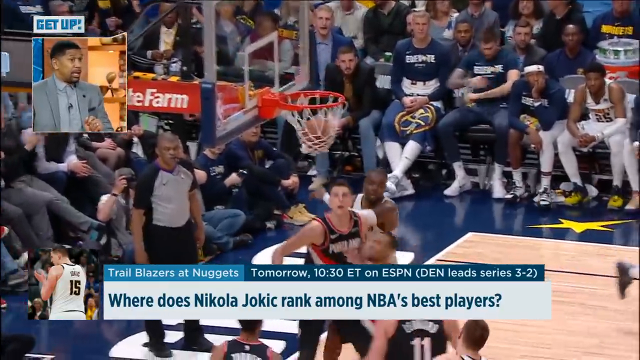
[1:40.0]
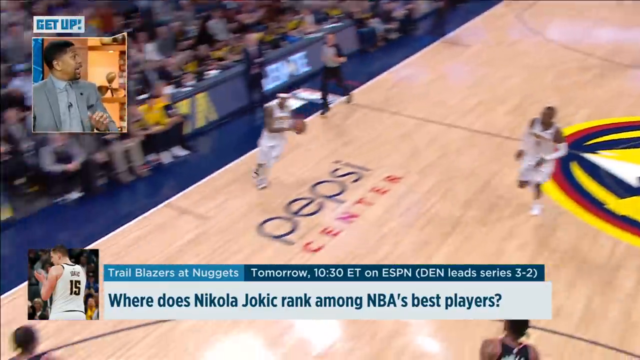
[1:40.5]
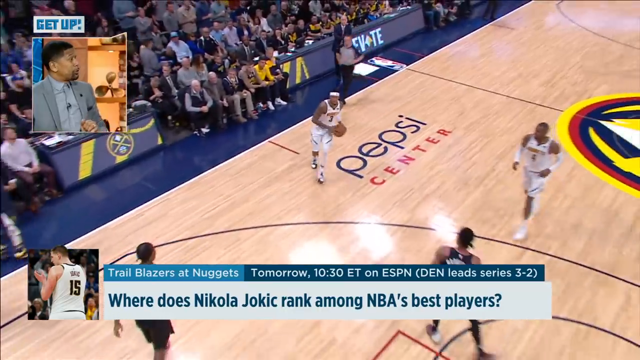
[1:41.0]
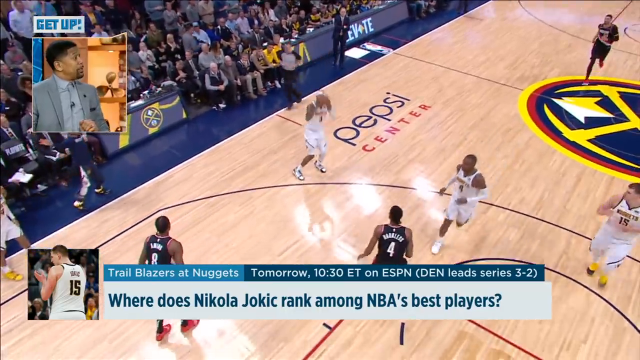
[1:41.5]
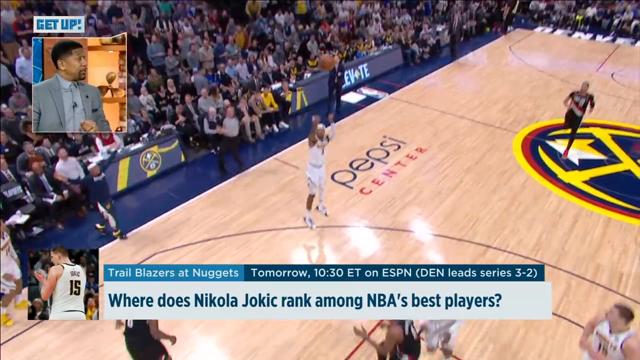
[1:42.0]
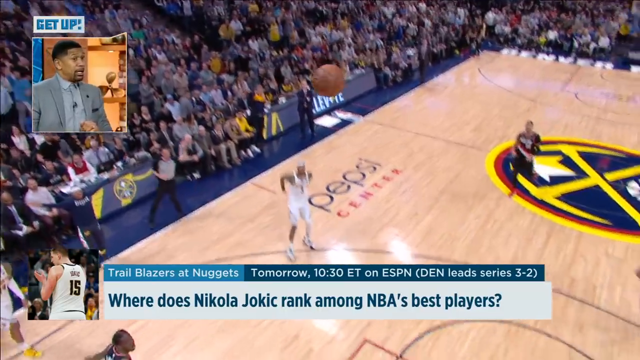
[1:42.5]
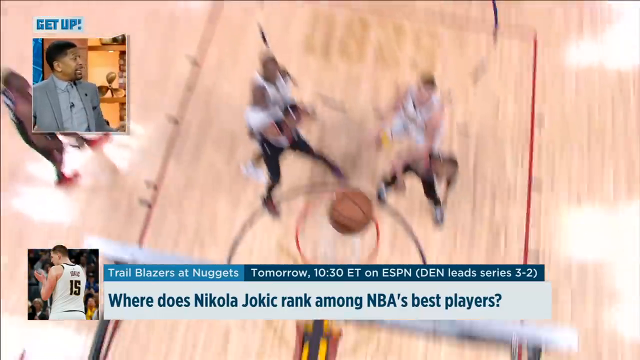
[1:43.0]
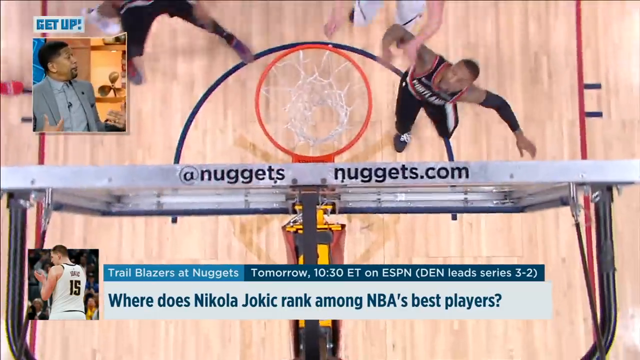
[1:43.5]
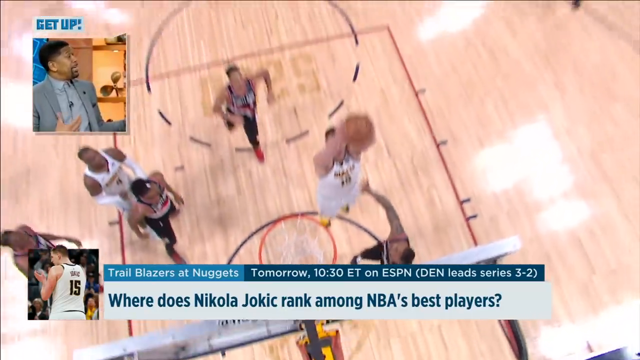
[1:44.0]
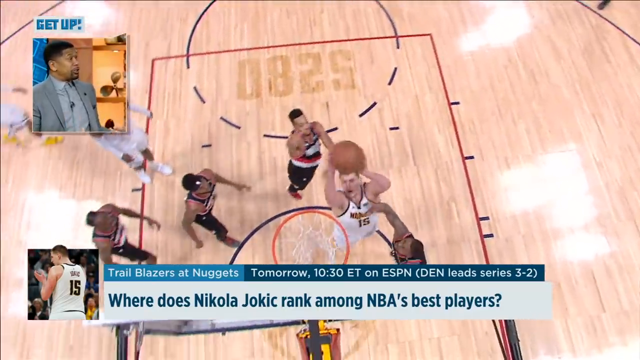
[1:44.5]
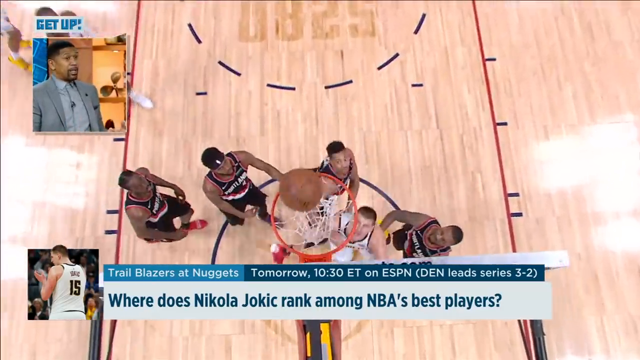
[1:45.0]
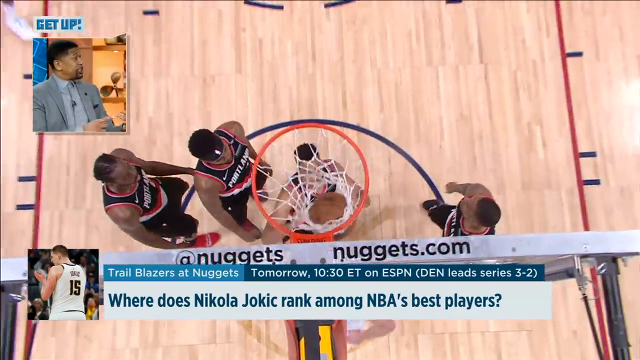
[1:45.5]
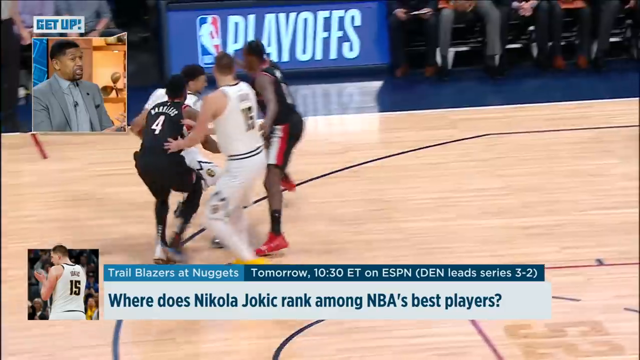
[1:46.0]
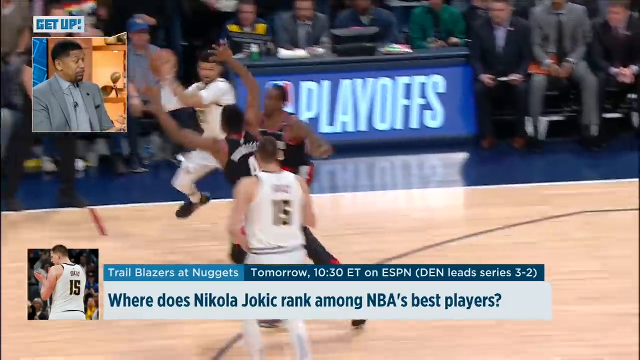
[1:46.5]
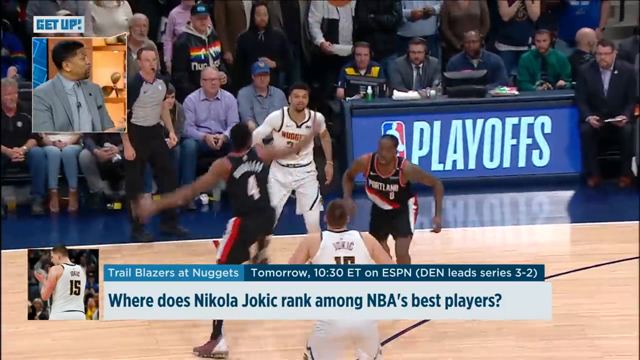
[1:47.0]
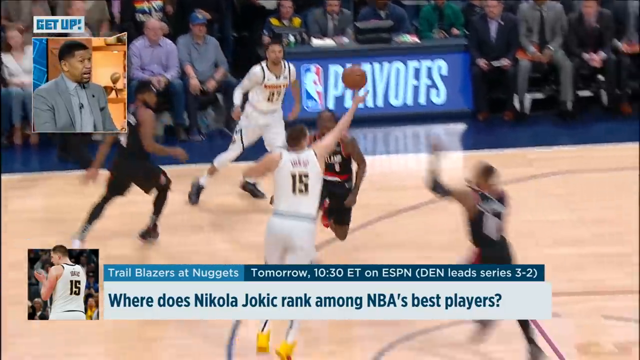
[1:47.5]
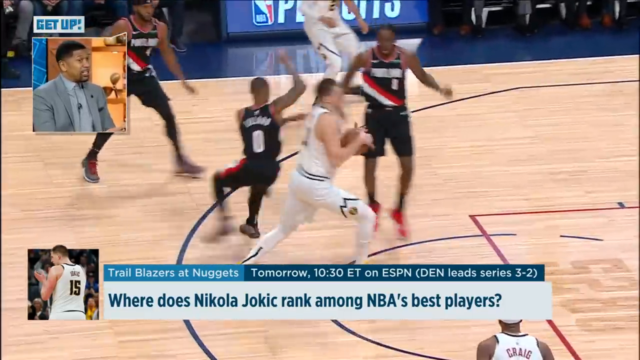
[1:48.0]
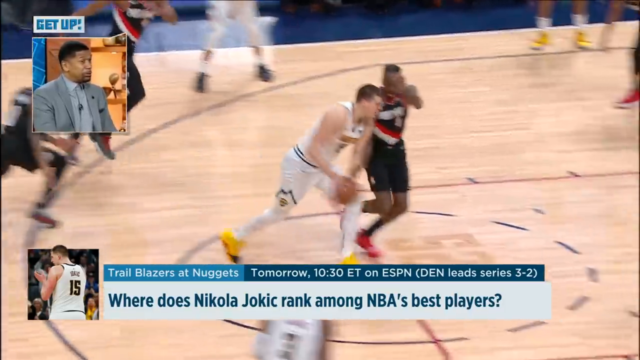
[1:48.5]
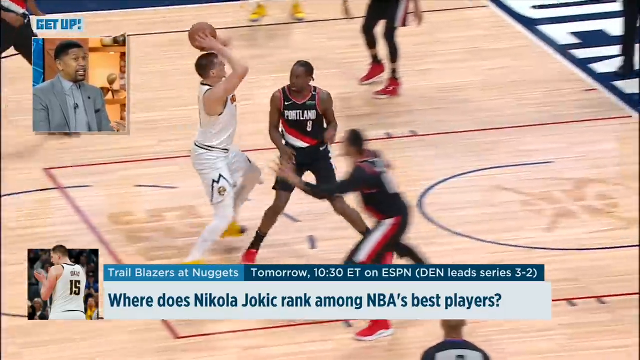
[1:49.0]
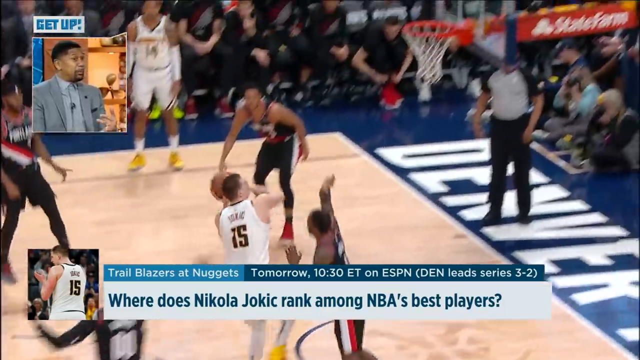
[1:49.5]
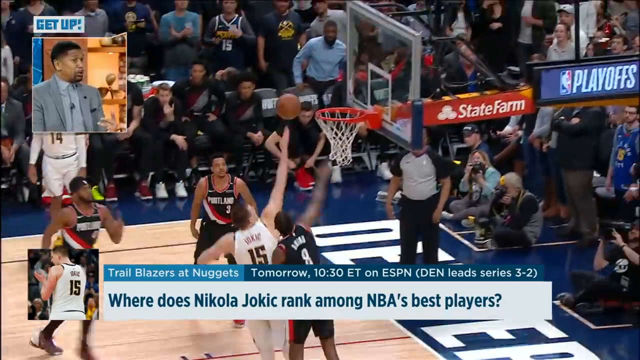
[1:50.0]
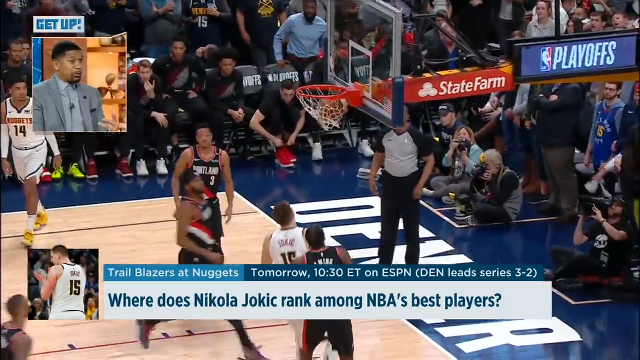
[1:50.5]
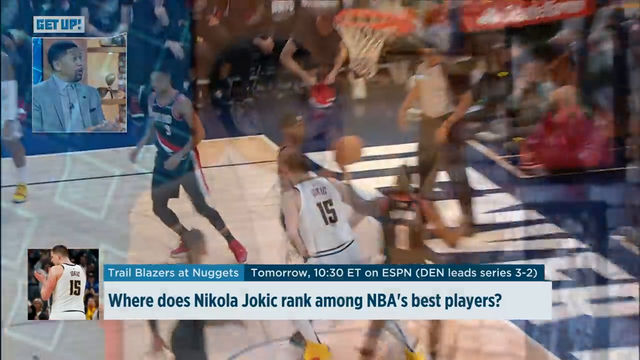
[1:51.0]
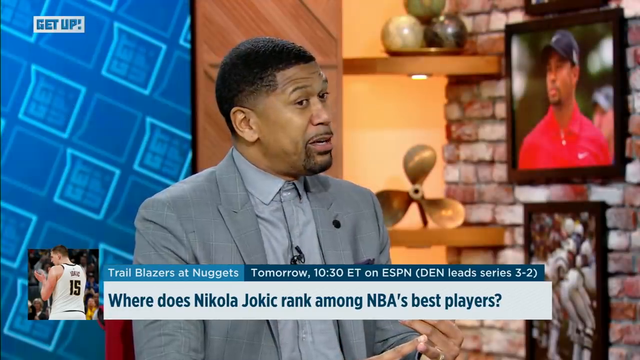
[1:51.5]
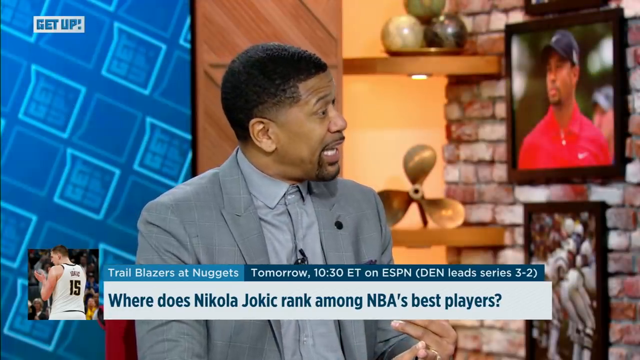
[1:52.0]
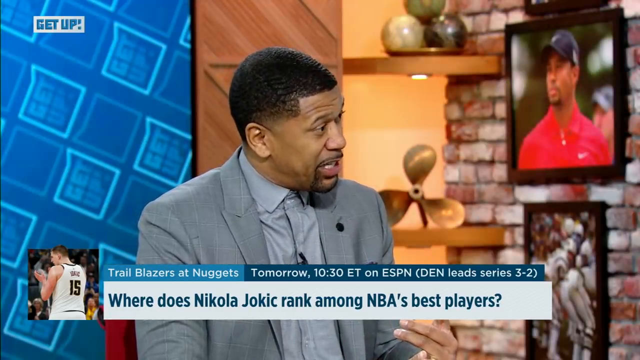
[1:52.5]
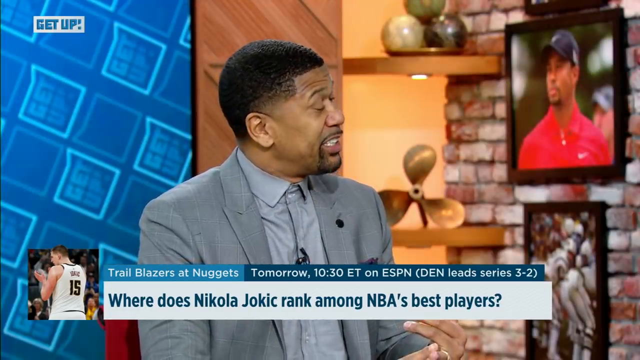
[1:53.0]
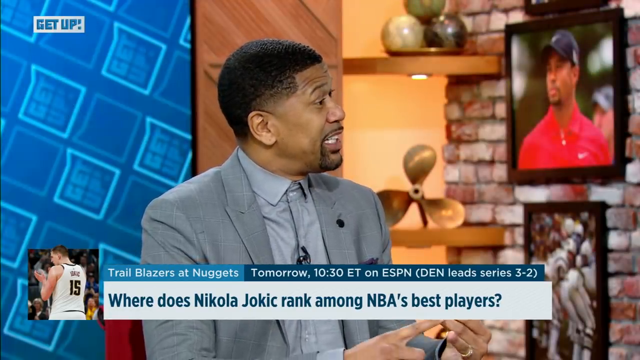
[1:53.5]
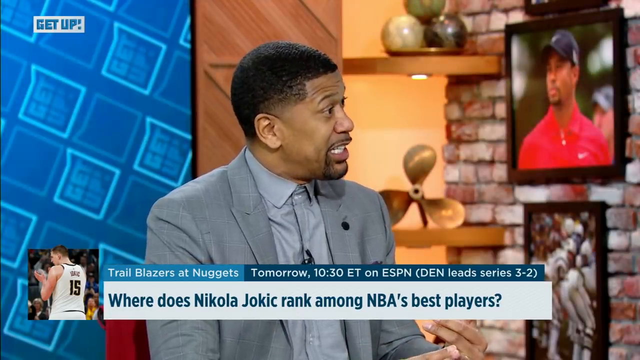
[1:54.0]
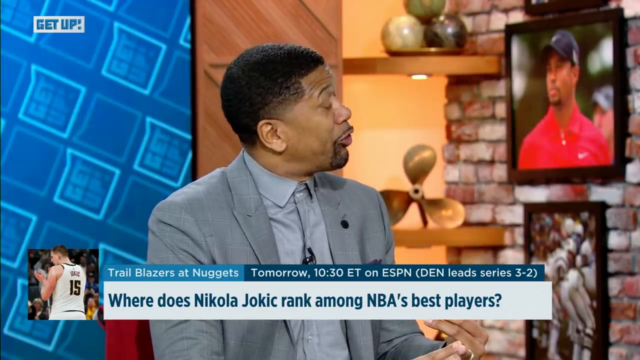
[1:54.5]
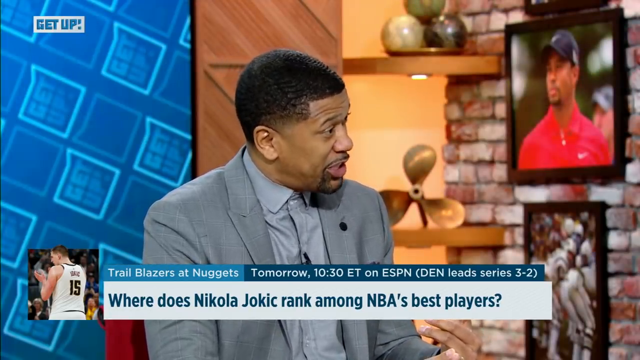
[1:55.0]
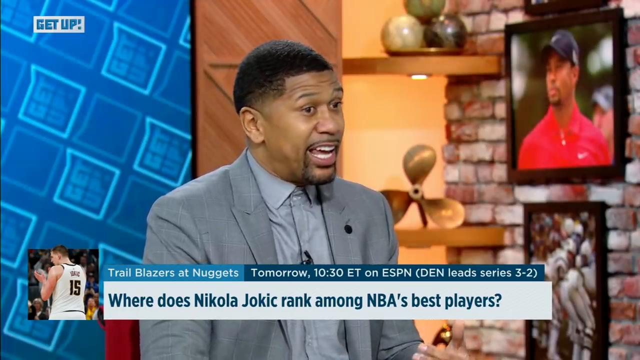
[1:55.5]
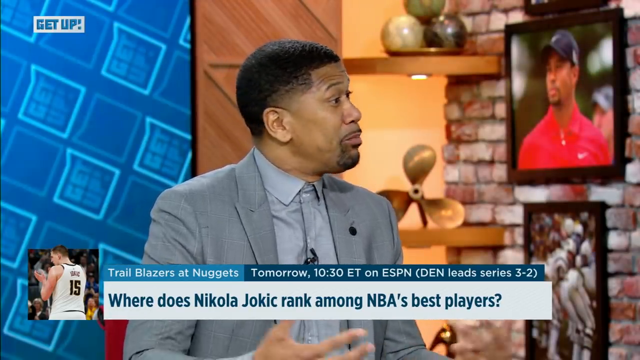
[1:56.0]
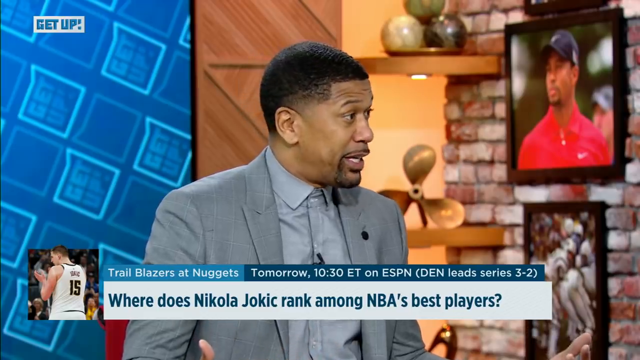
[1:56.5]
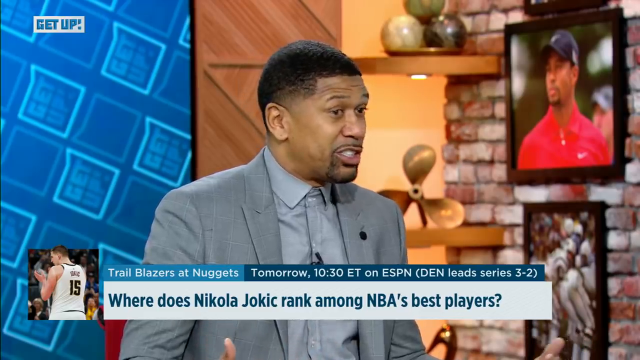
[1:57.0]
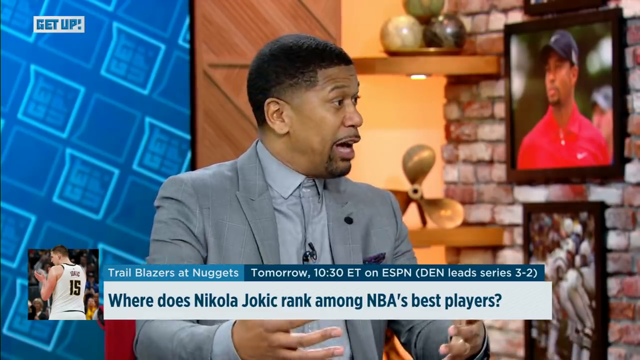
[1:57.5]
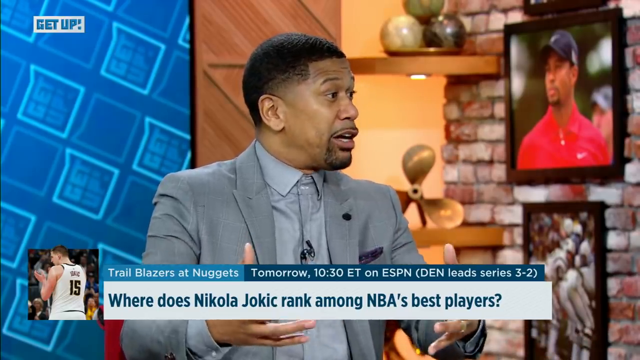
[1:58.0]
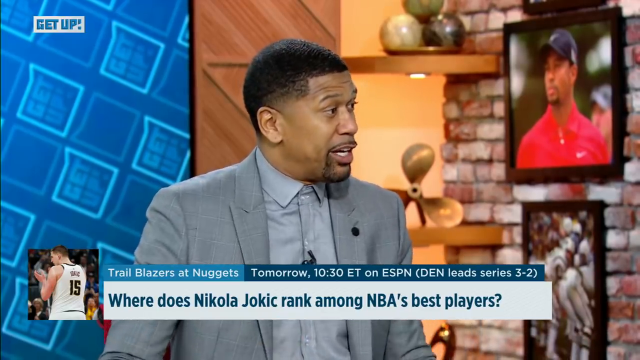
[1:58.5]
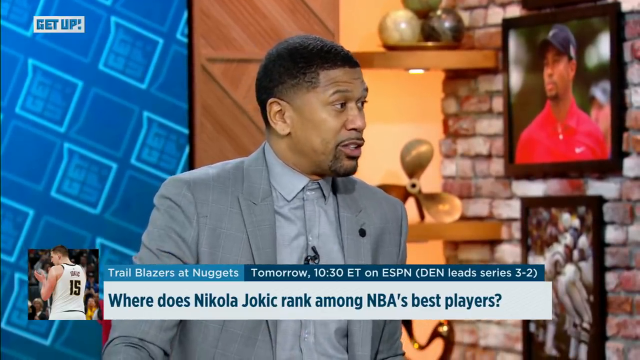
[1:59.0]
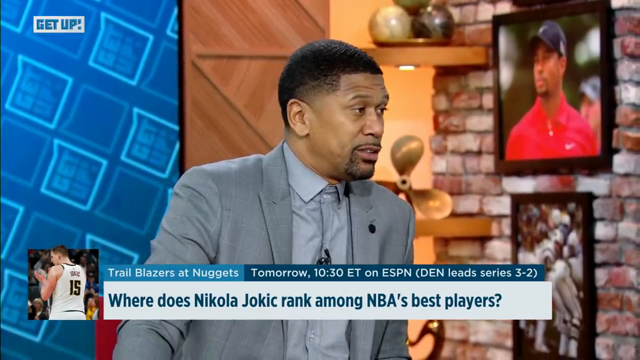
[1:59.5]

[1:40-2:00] The man in the gray shirt and jacket appears in an inset box in the top left corner. At the bottom of the screen is a bar whose top line reads "Trailblazers at Nuggets" in white font on a pale blue background, followed in white font on a black background by "tomorrow, 10:30 ET on ESPN (DEN leads series 3-2)" and below that "where does Nikola Jokic rank among NBA's best players?" Action shots follow: someone shoots a three from the right side of the court, the ball goes around the rim, someone picks up the rebound and scores a basket. Another player makes his way into the scoring zone and scores from close range. The video returns to the gray-shirted man, alone in the center of the screen, speaking and gesticulating with his hands forward, and then to the two men discussing the game.